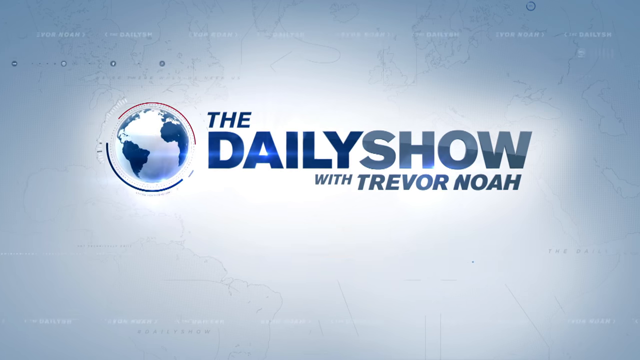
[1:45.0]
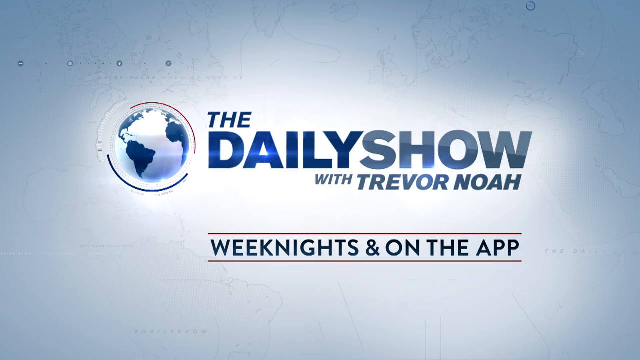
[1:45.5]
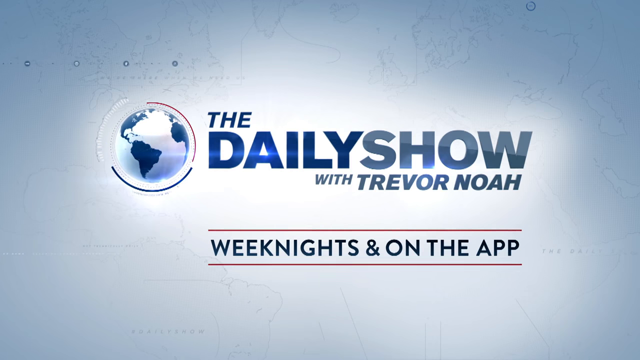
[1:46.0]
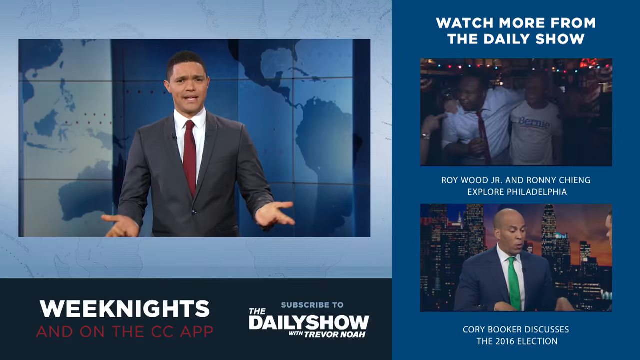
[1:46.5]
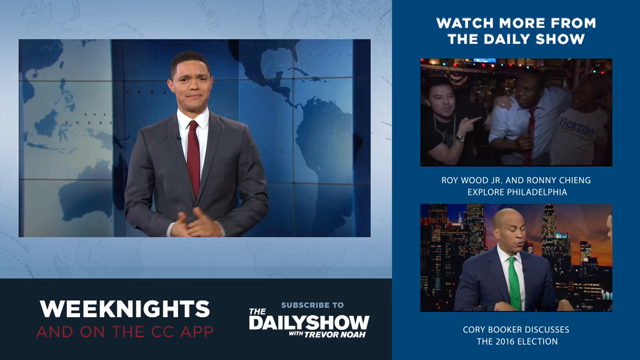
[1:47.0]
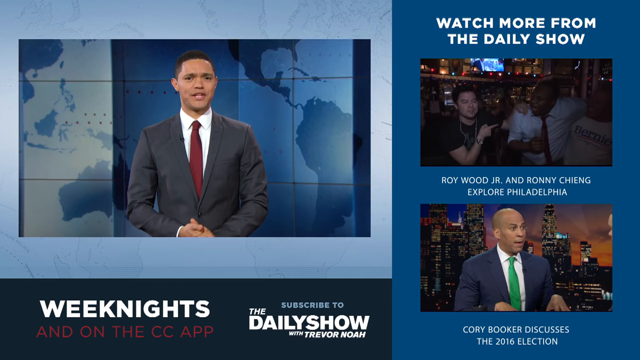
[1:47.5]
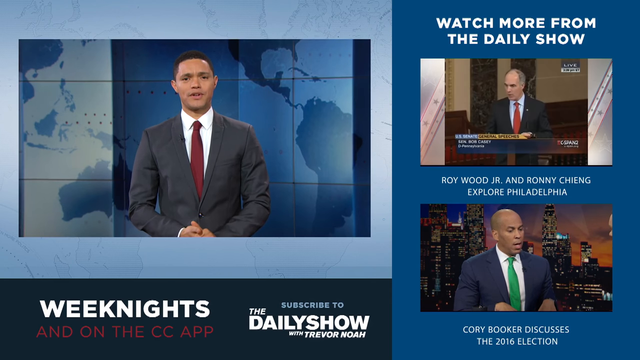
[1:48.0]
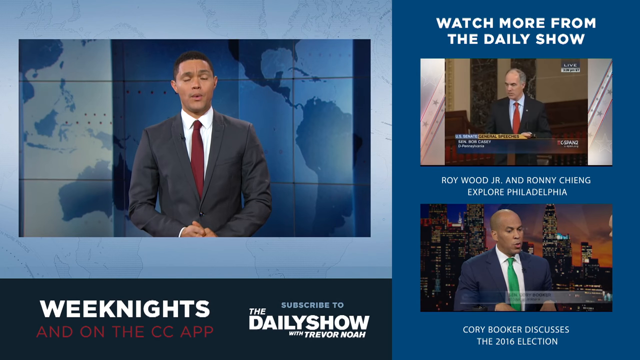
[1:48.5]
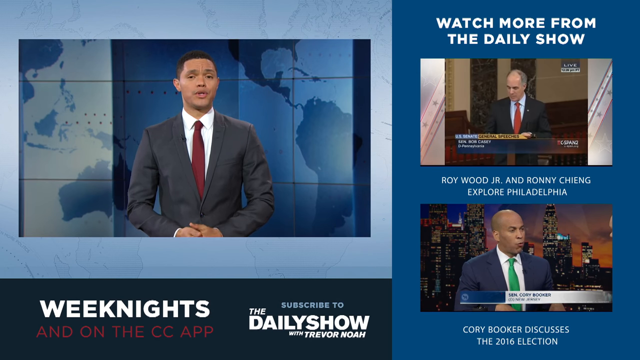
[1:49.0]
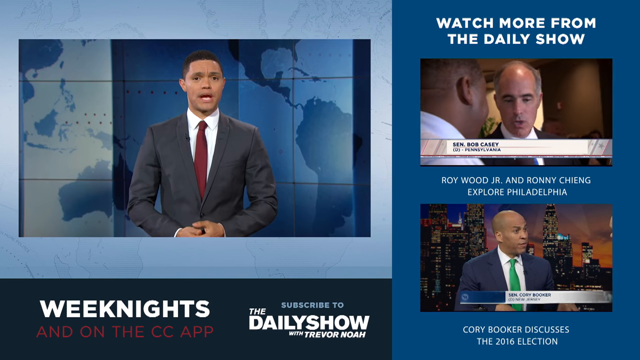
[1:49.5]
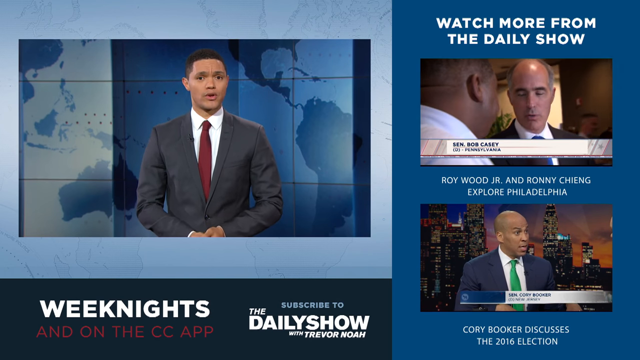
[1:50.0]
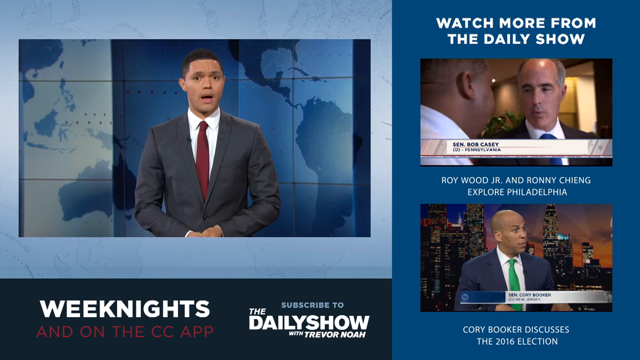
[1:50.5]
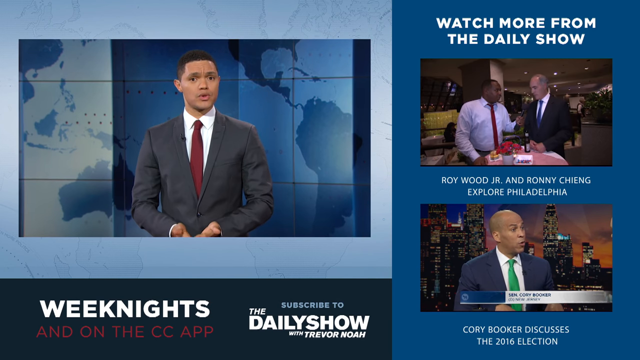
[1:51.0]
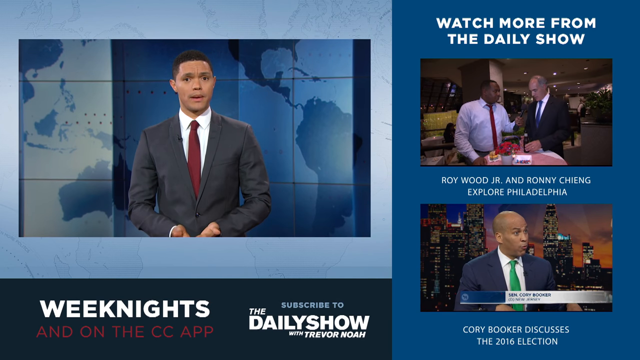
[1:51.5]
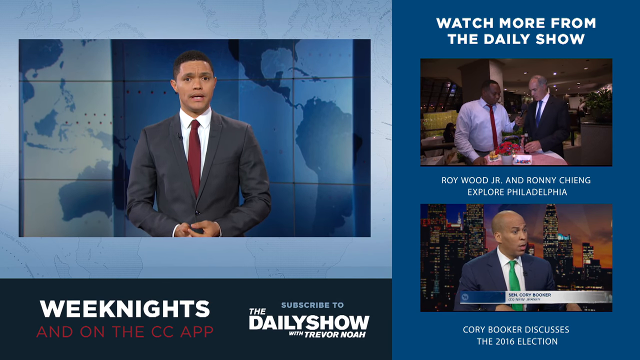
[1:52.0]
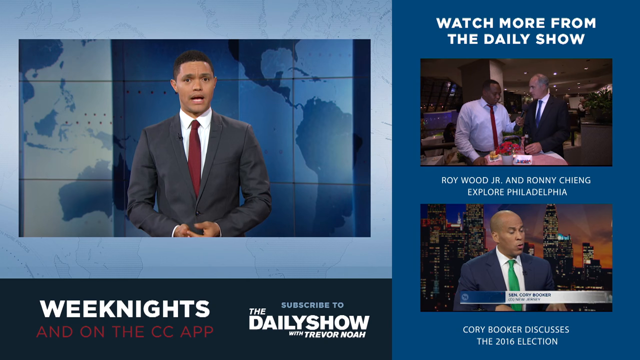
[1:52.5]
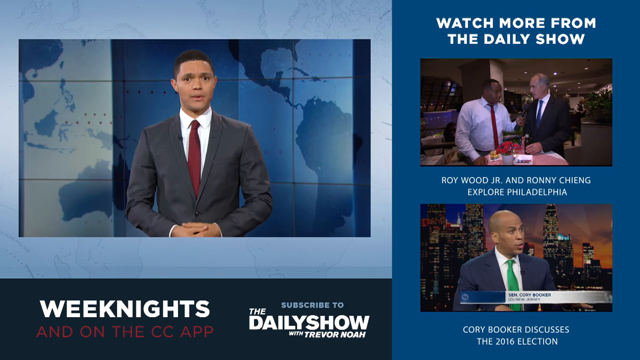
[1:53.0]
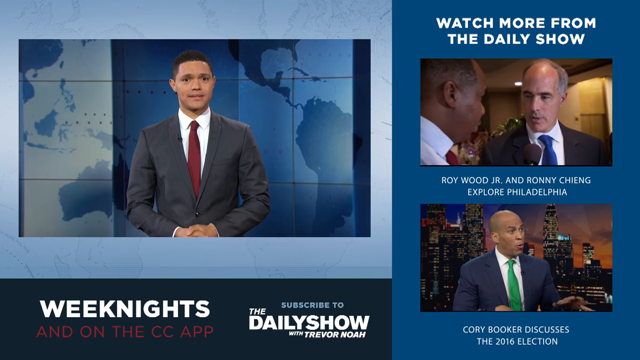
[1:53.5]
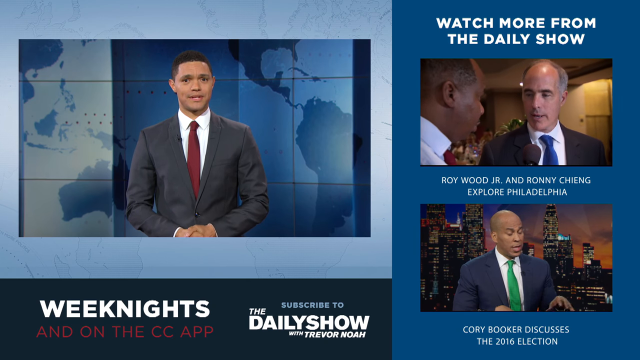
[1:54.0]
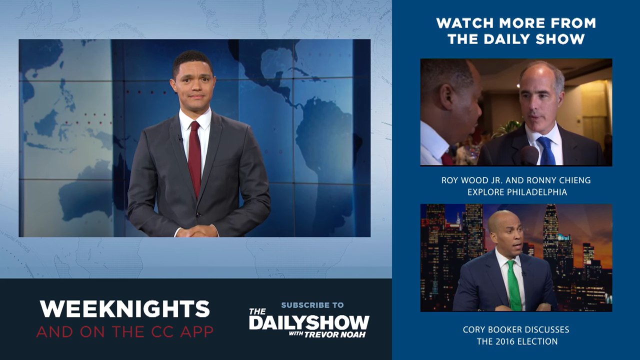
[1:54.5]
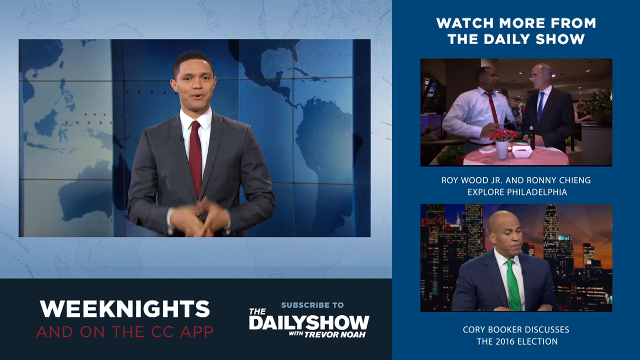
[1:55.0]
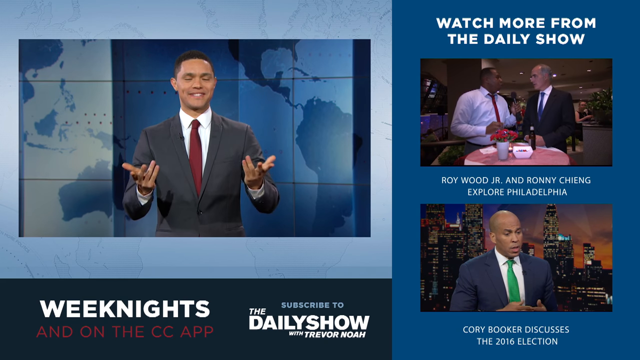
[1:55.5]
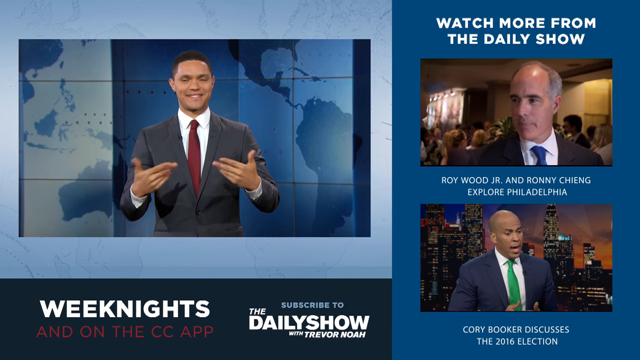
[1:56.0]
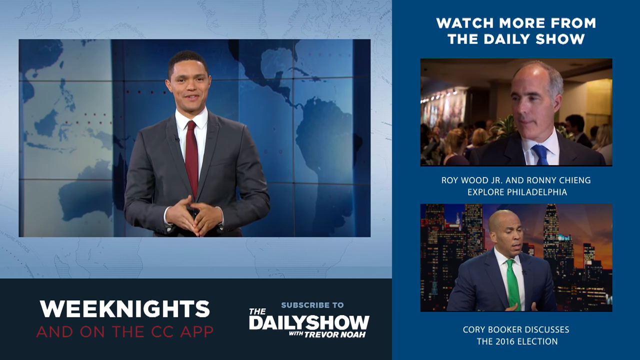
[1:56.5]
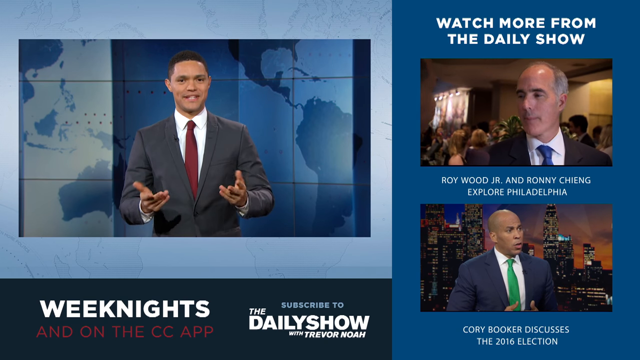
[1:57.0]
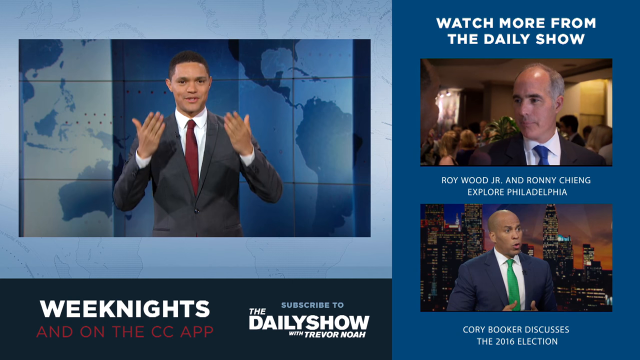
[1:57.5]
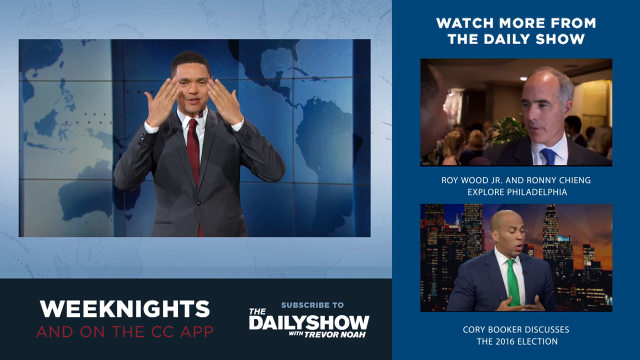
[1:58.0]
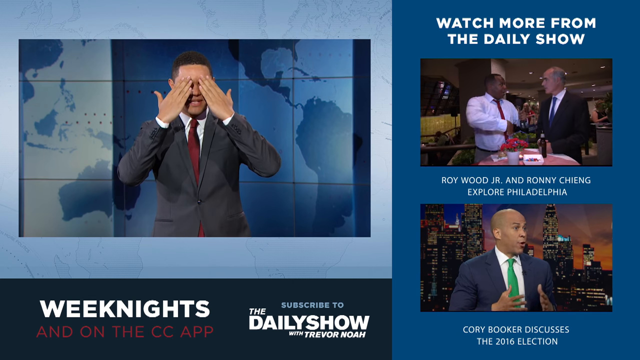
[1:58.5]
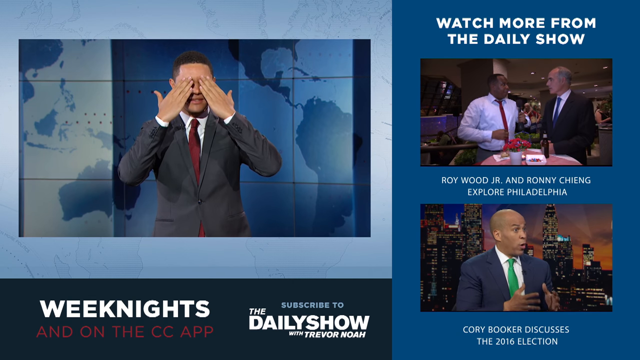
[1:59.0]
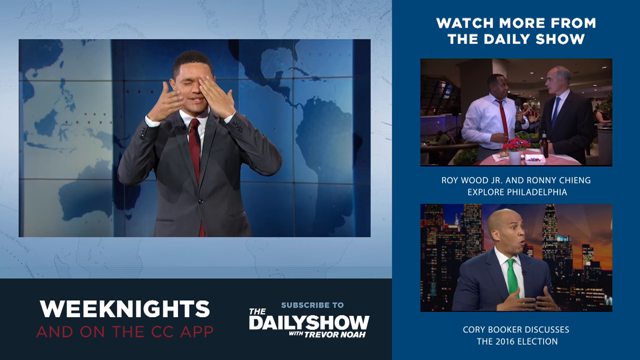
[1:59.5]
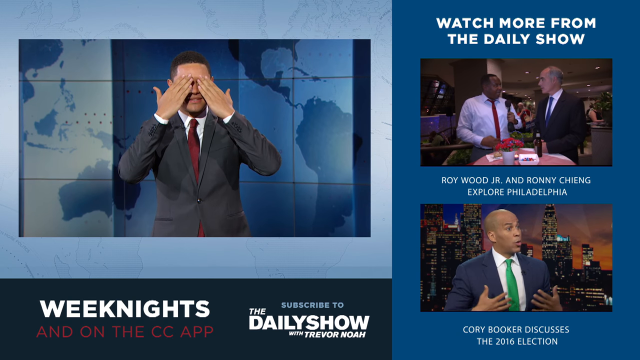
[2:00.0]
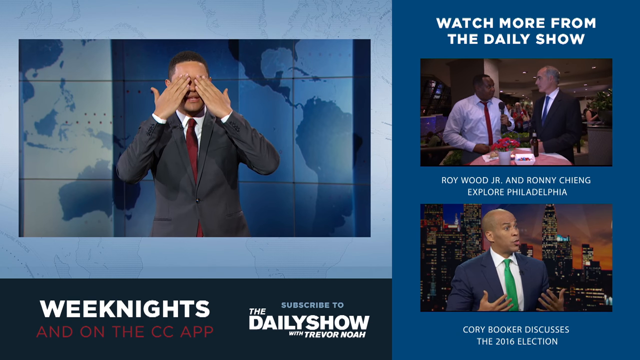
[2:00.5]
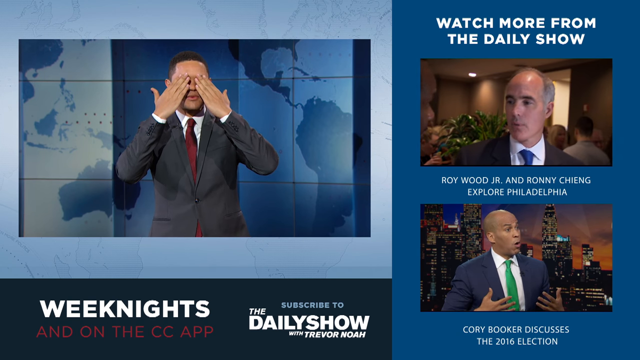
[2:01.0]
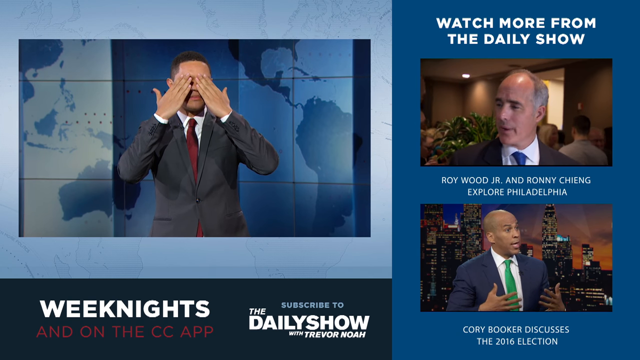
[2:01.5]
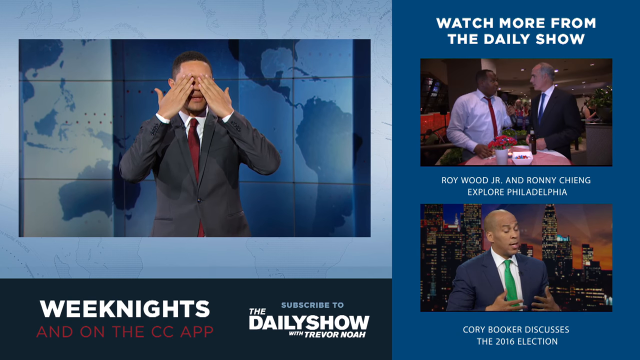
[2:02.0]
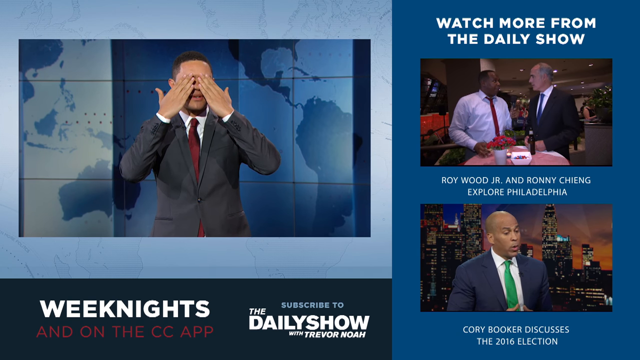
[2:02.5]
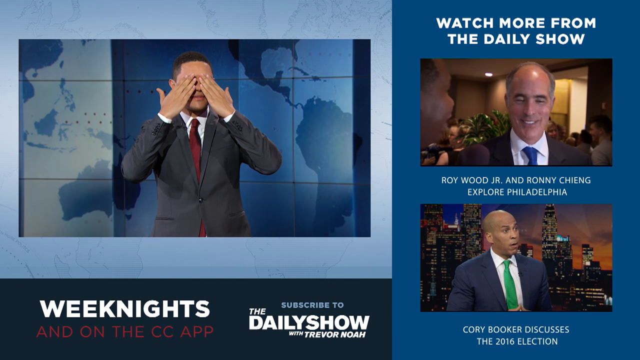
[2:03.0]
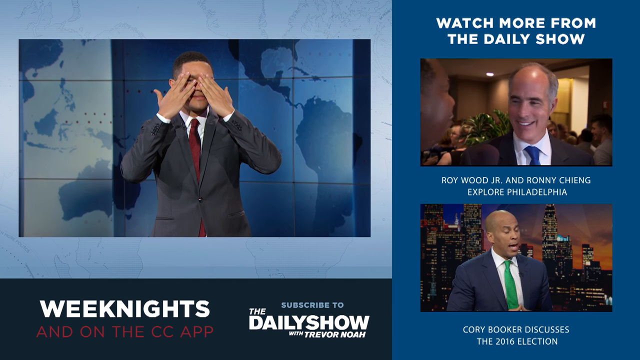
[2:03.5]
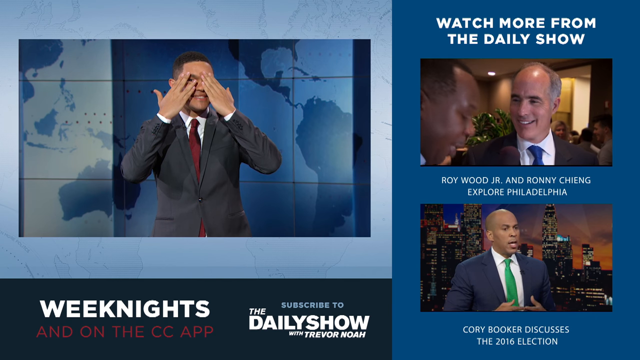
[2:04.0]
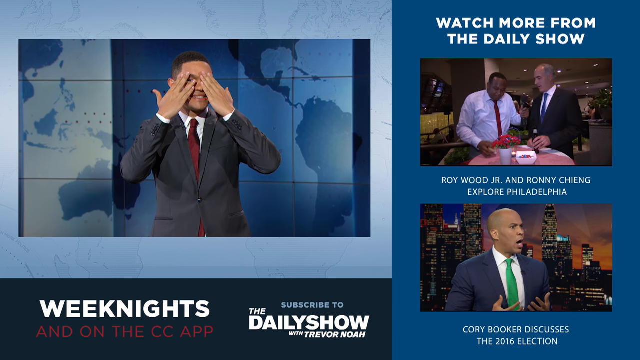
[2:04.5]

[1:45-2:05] Text reads "The Daily Show with Trevor Noah, weeknights at 8 and 9pm." Then what looks like a YouTube page appears with three separate video insets showing different activity. The largest shows Trevor Noah speaking directly to the camera in front of a world map background, on which South America, Australia, the southern half of North America and the eastern half of Asia are visible. On the right side of the screen are two small video pop-outs. One shows Senator Cory Booker, with text under it that says "Cory Booker discusses the 2016 election." The one above it shows Roy Wood Jr. and Ronny Chieng exploring Philadelphia: a black reporter speaking with a miserable-looking white man.